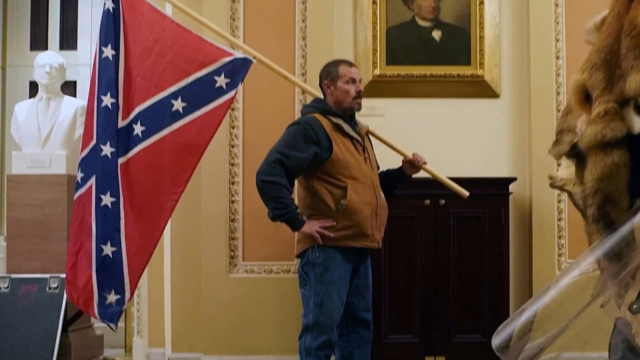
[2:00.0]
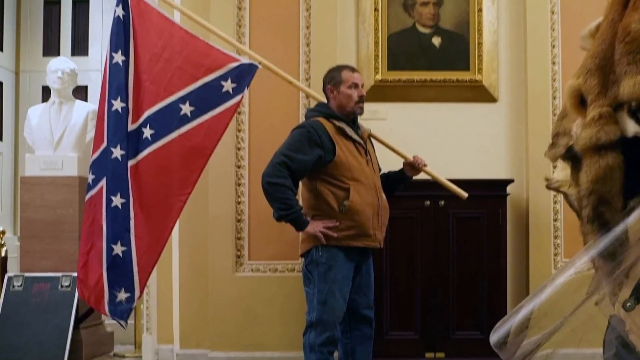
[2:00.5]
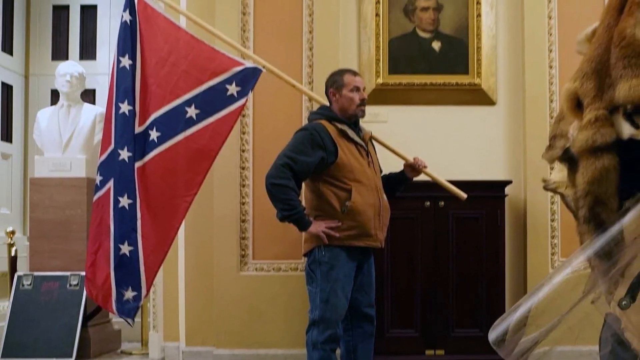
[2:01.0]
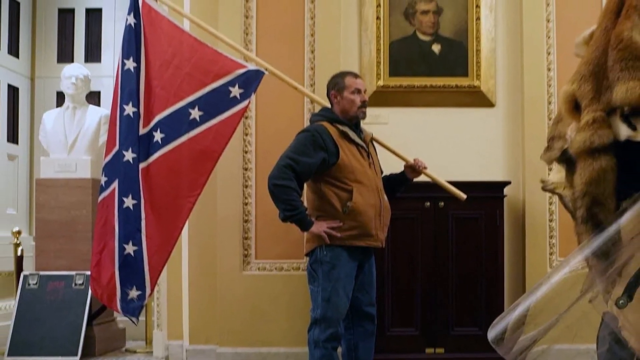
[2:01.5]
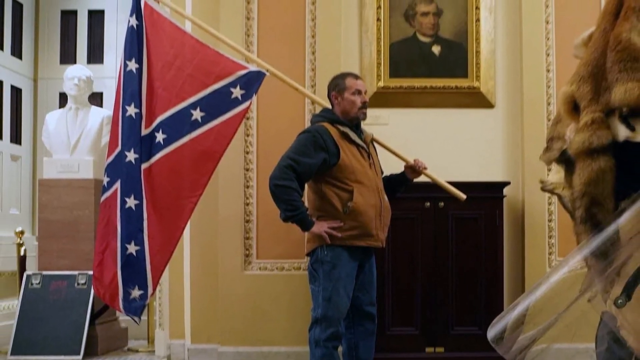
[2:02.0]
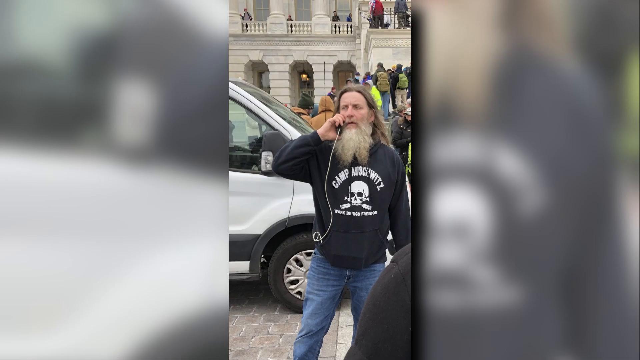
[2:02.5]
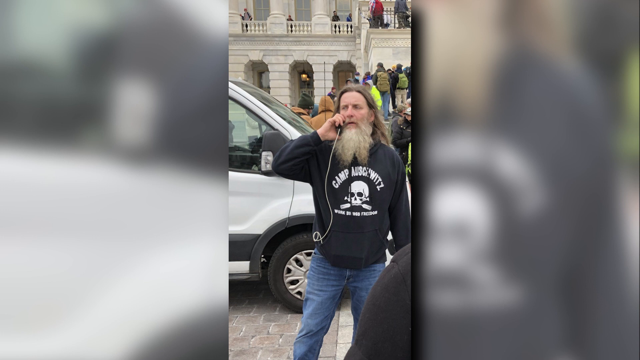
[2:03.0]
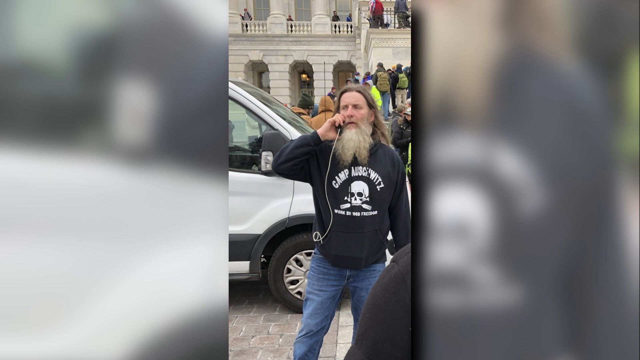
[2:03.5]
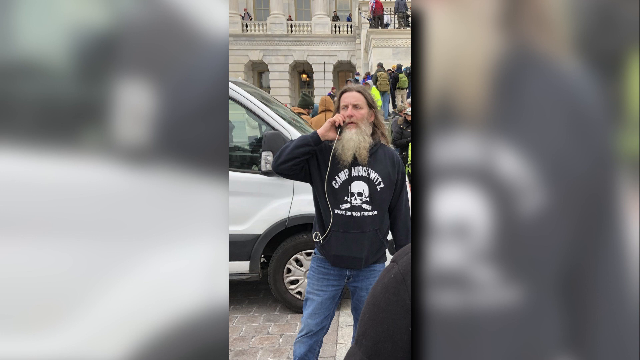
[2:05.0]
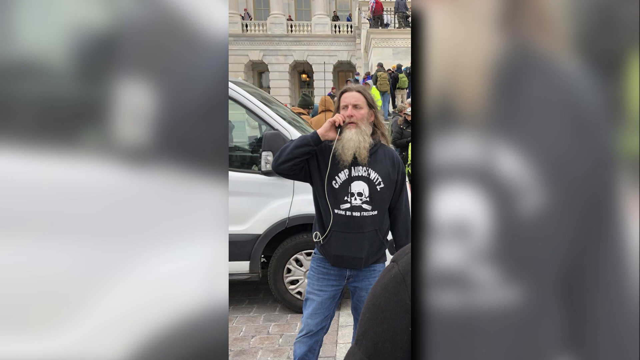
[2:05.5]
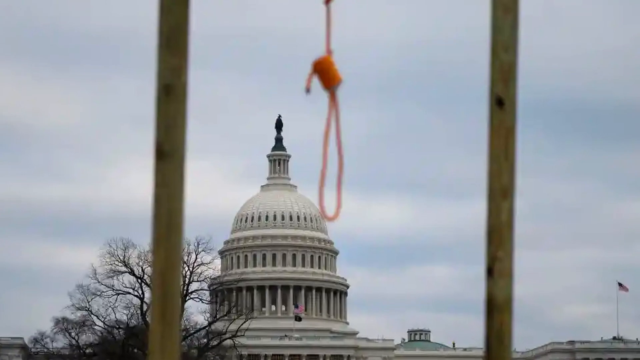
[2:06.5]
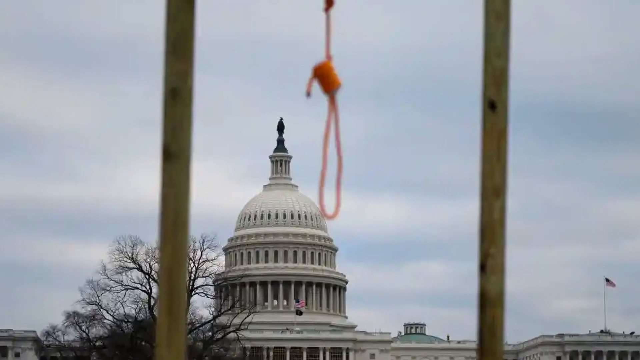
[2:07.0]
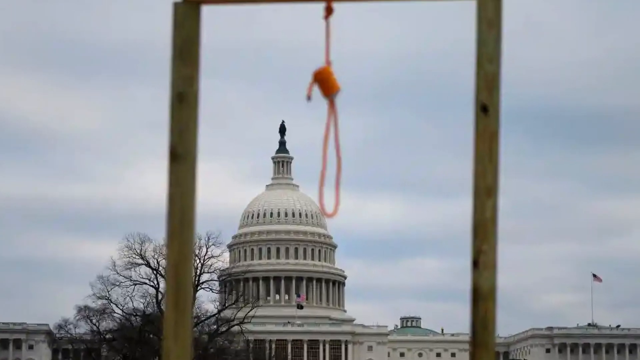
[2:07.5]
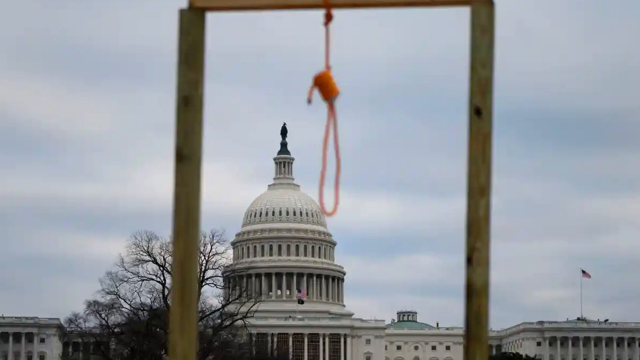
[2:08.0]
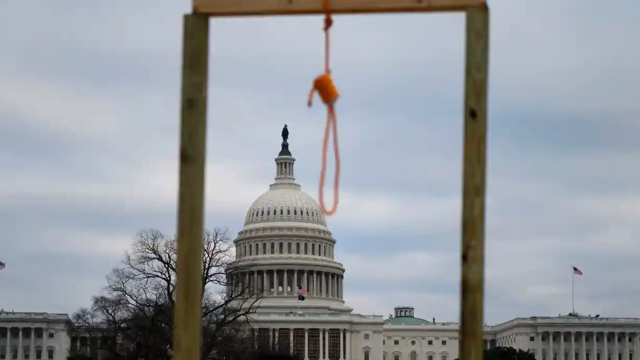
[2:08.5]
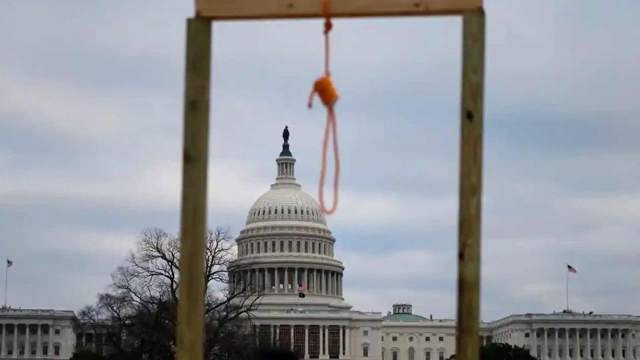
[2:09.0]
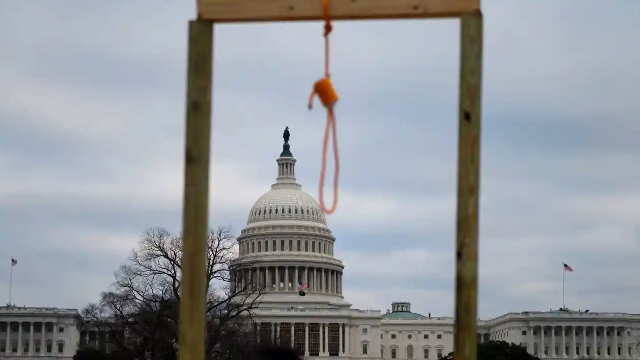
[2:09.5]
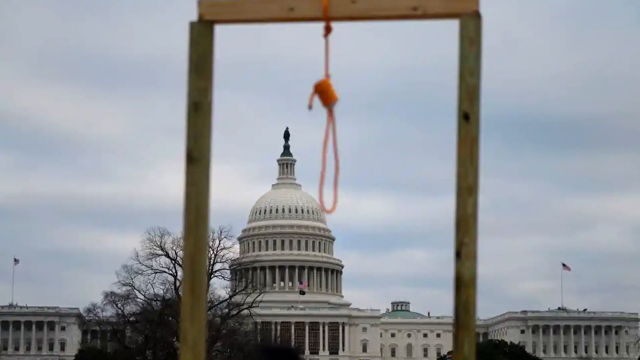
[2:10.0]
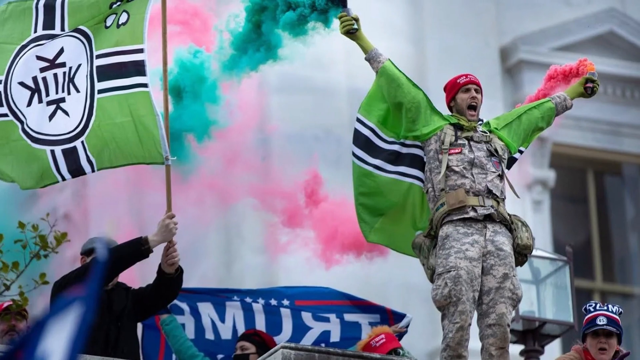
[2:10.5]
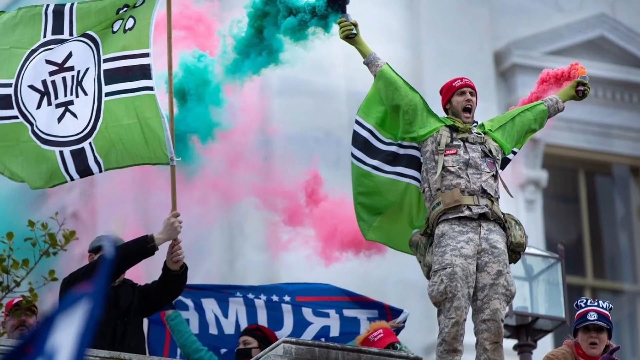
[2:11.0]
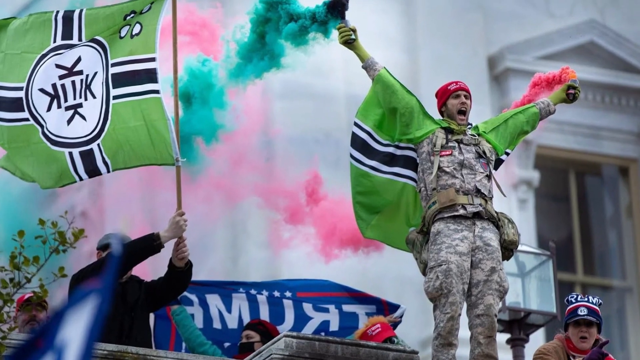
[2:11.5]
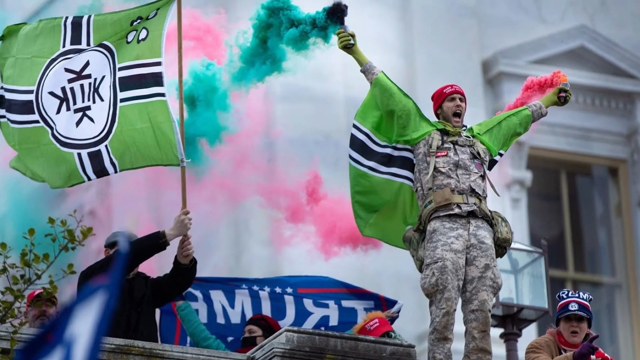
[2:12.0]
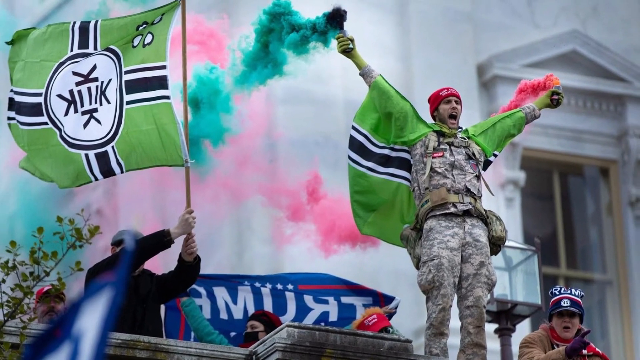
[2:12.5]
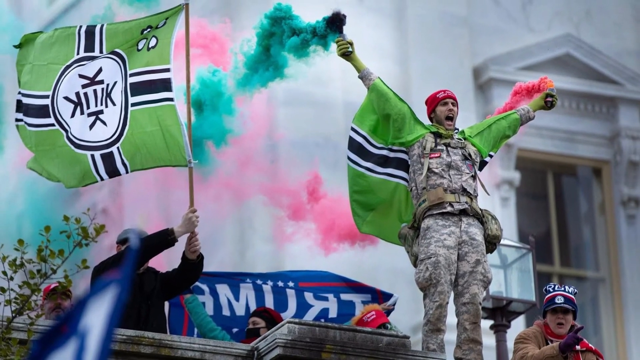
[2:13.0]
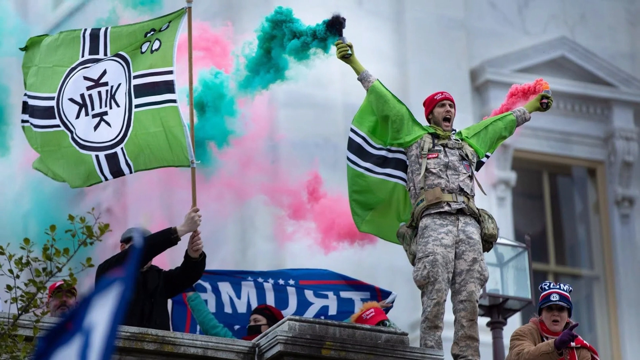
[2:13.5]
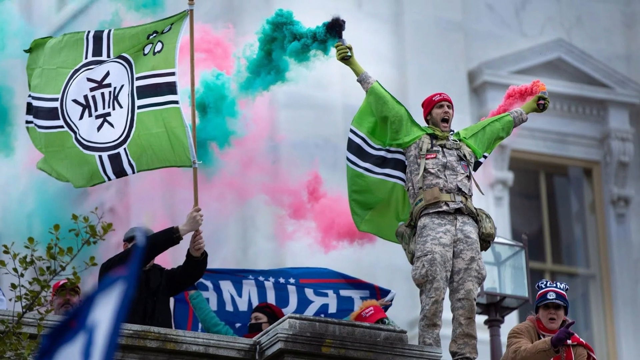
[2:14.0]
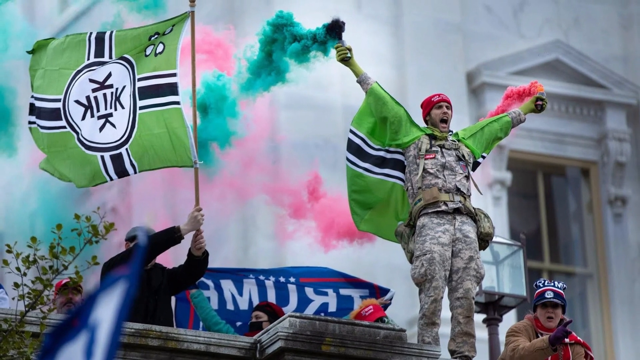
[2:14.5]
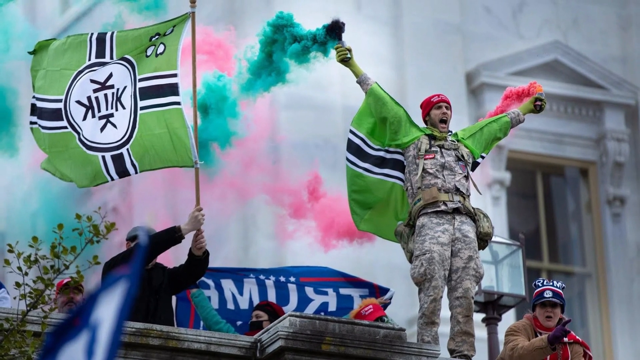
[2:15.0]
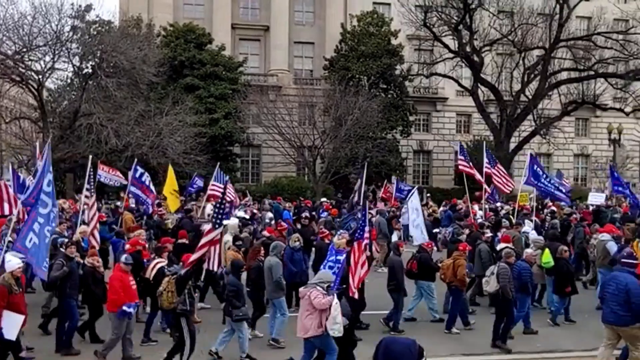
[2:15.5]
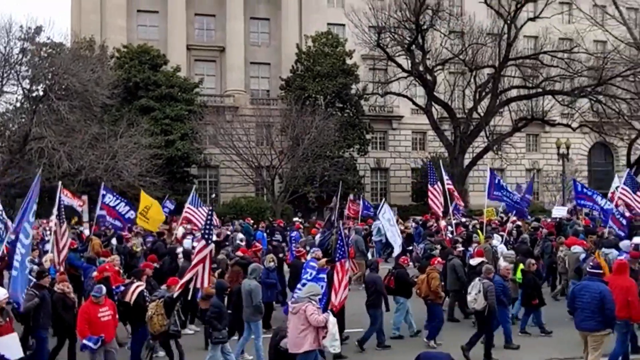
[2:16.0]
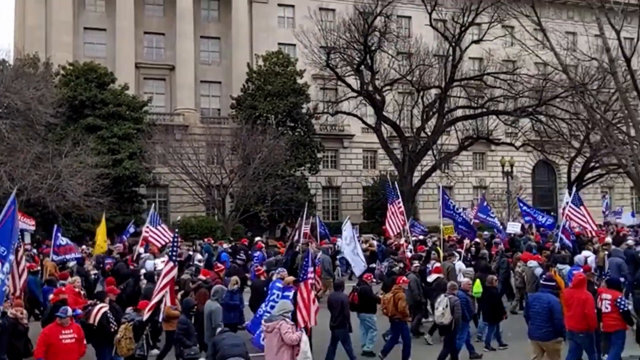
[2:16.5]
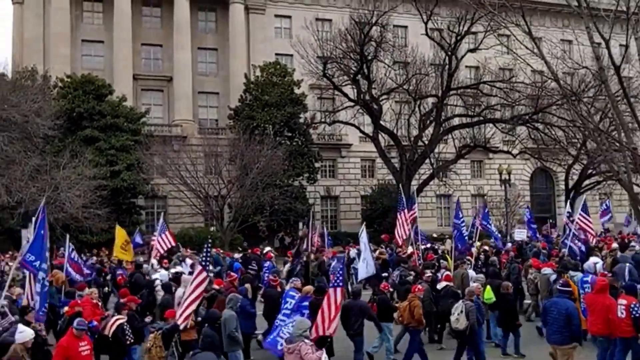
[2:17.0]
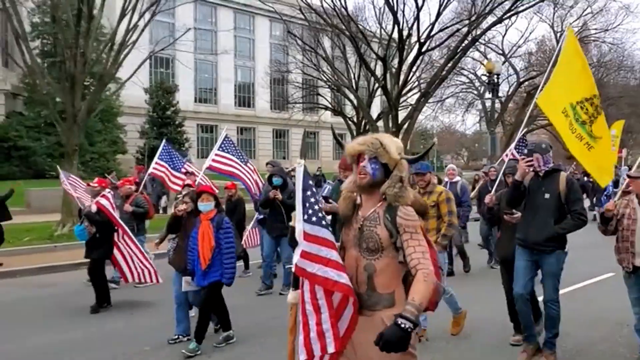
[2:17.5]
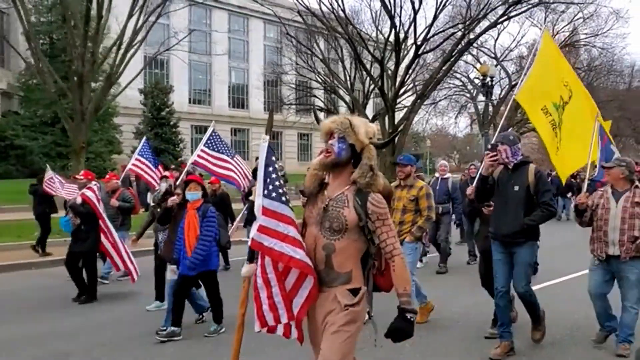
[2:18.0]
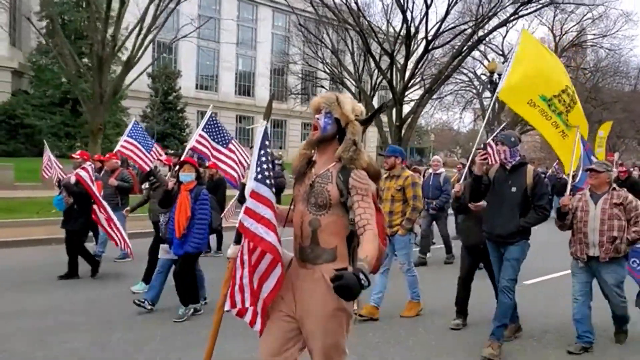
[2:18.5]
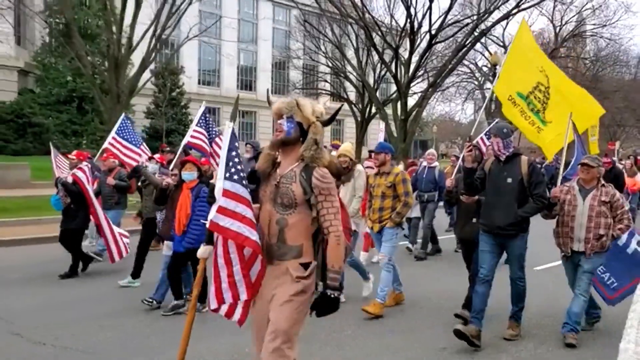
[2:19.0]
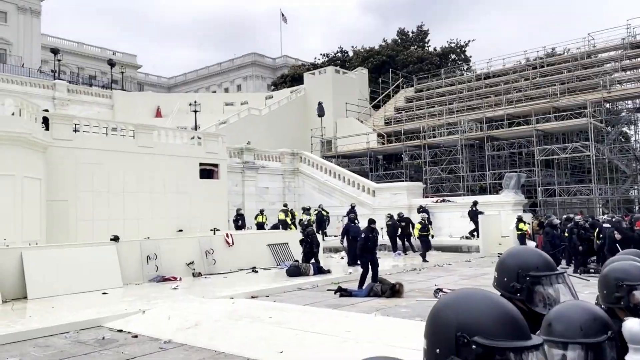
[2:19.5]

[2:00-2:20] Inside Congress, a man holds the Confederate flag underneath a picture of Abraham Lincoln. The screen then cuts to a man on a mobile phone with a very long beard and long hair, wearing a sweatshirt saying "Camp Auschwitz" with a skull featured underneath. He looks to be stood in front of the federal buildings in Washington. The camera then cuts to a shot of the dome of the Federal Building with the statue on top; in the foreground, a noose of orange rope hangs from a wooden scaffold. The sky is grey. Next, a photograph shows a man in camouflage wear with a green flag around his shoulders, bearing a black and white cross and a circle with "KKKK" in black. In his left and right hands he holds different flares, one green and one red, which billow smoke towards the federal building. His hands appear green. Another man holds the same green, black and white flag. The camera then cuts to a large gathering of protesters with American flags walking by the trees. One individual in a buffalo-head-type headdress with horns leads some protesters, carrying the American flag along the street with the protesters behind him.